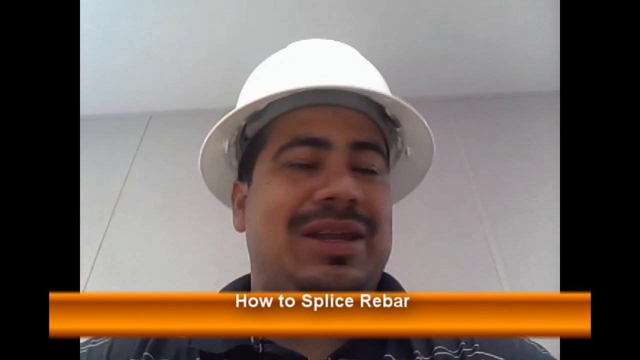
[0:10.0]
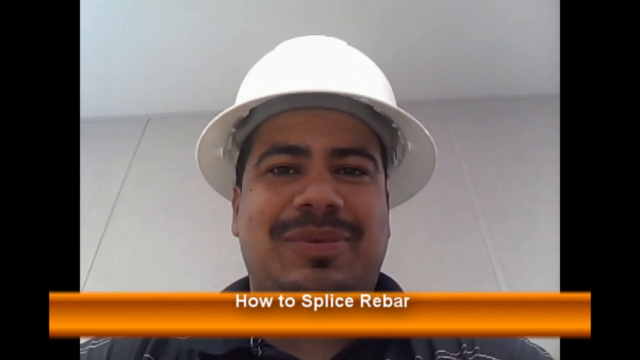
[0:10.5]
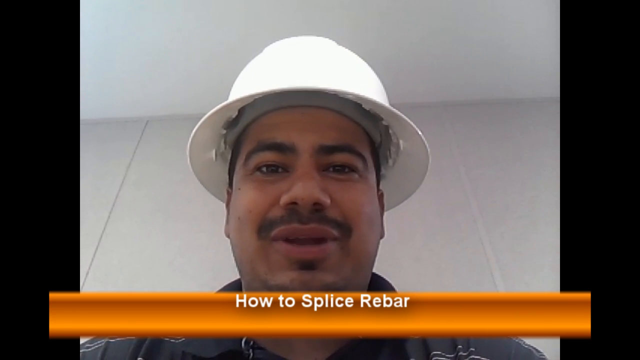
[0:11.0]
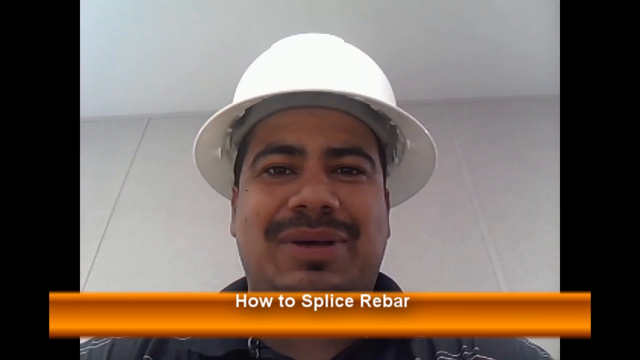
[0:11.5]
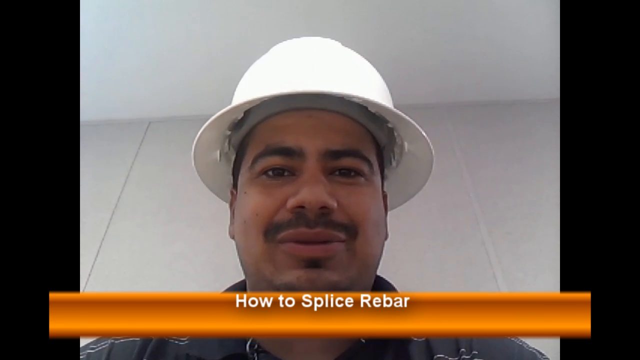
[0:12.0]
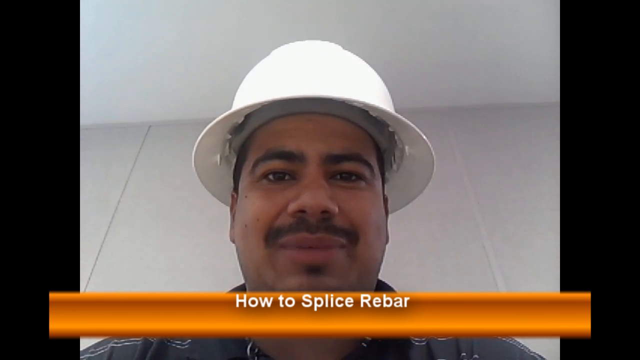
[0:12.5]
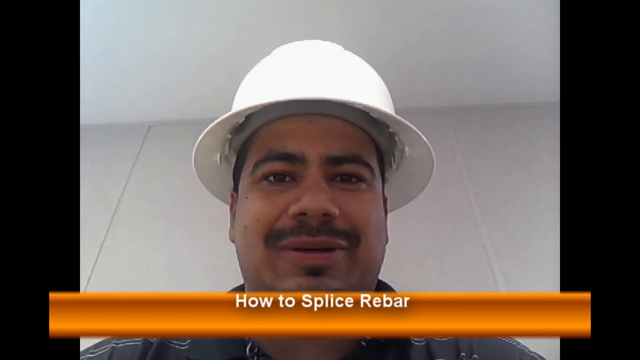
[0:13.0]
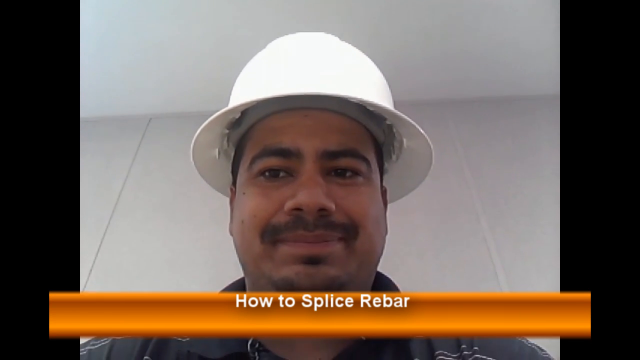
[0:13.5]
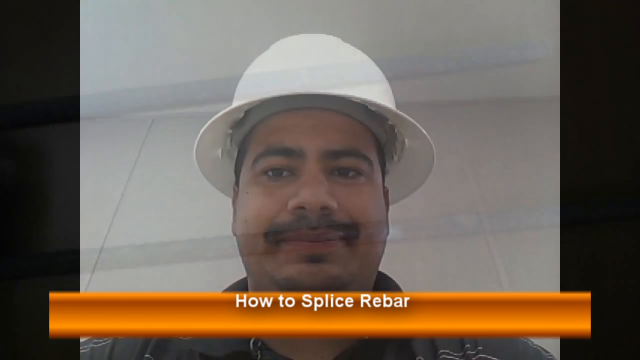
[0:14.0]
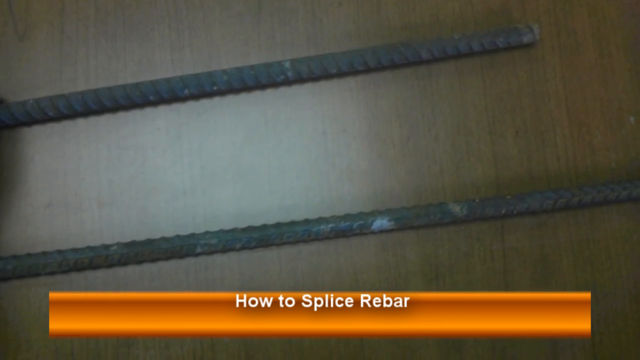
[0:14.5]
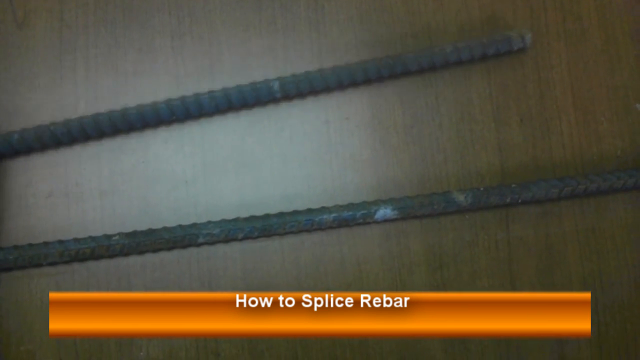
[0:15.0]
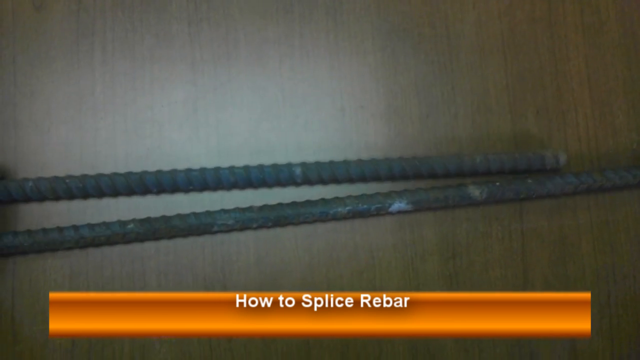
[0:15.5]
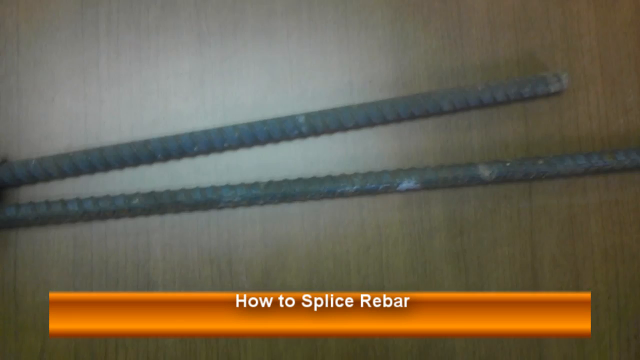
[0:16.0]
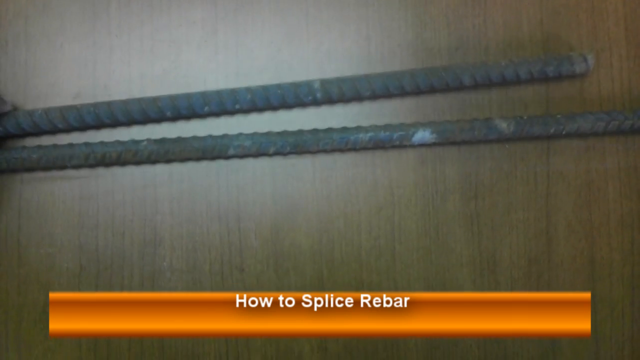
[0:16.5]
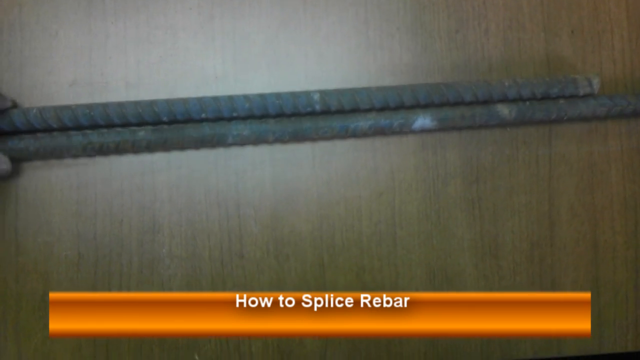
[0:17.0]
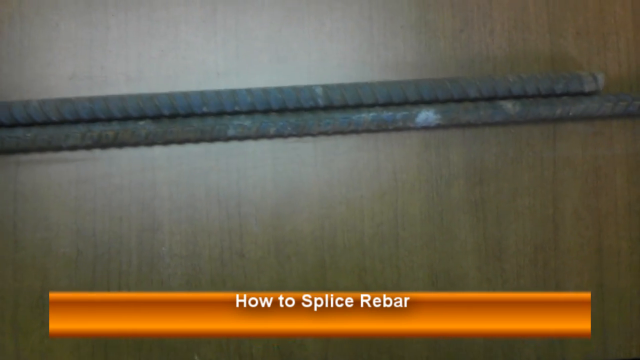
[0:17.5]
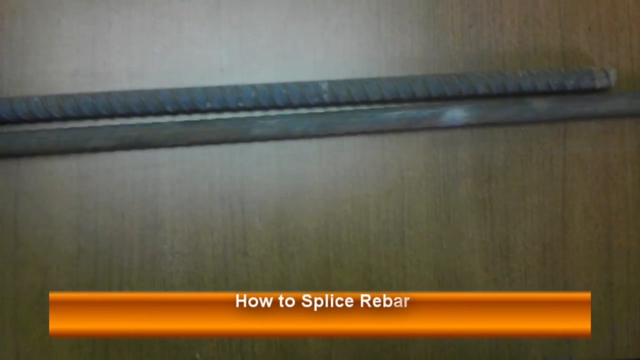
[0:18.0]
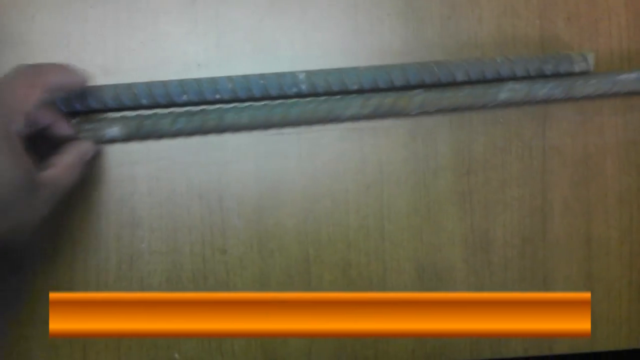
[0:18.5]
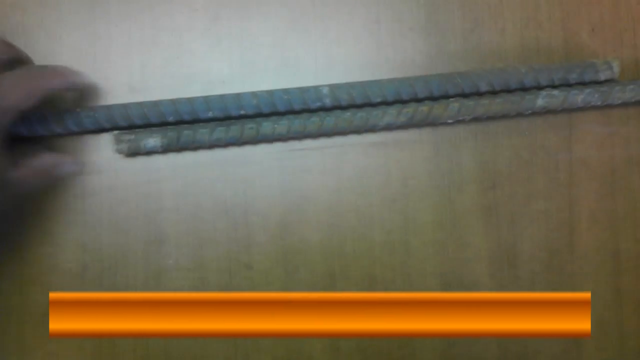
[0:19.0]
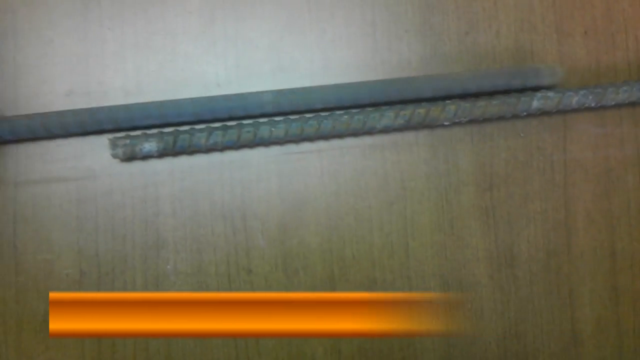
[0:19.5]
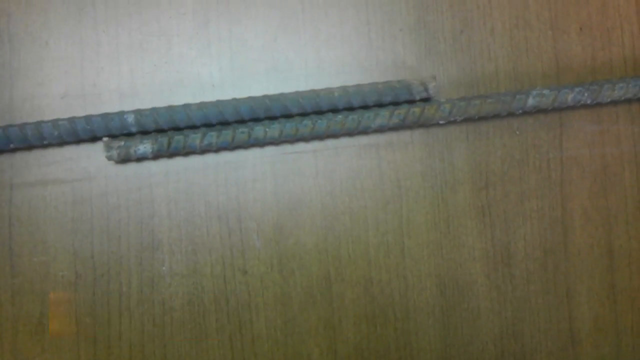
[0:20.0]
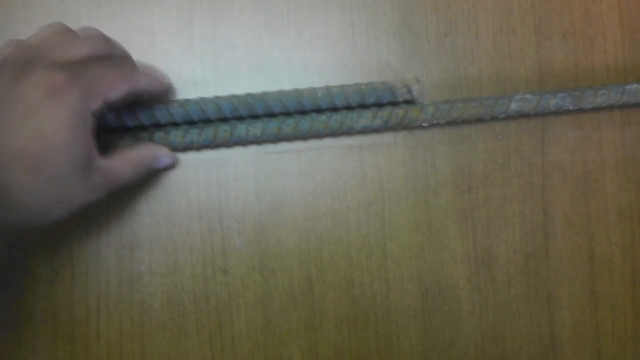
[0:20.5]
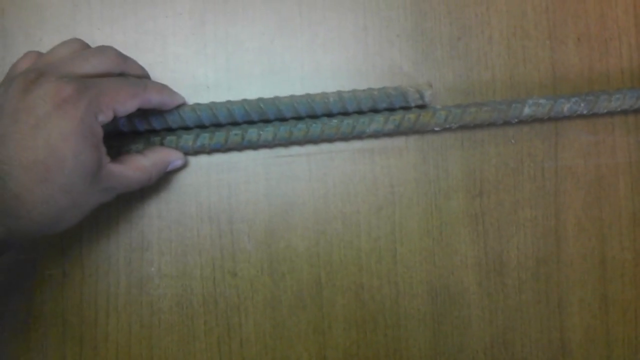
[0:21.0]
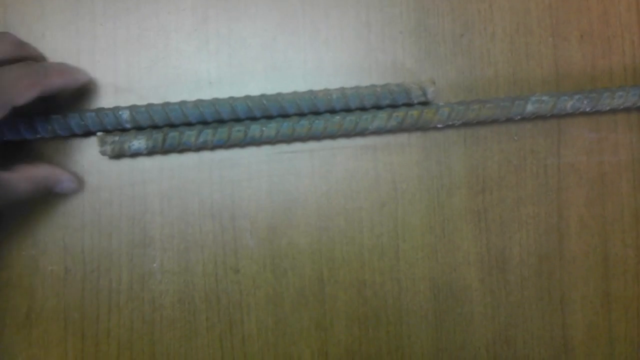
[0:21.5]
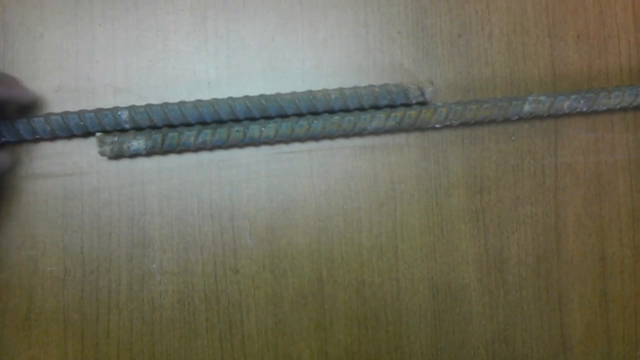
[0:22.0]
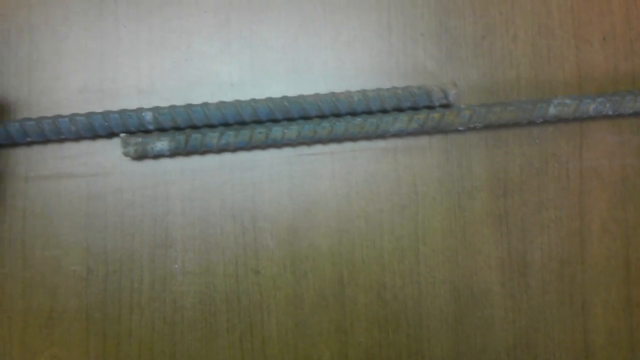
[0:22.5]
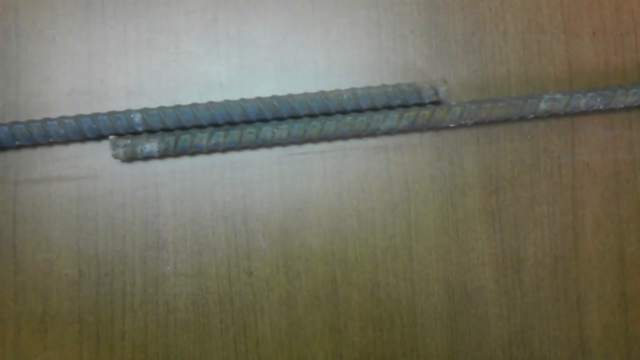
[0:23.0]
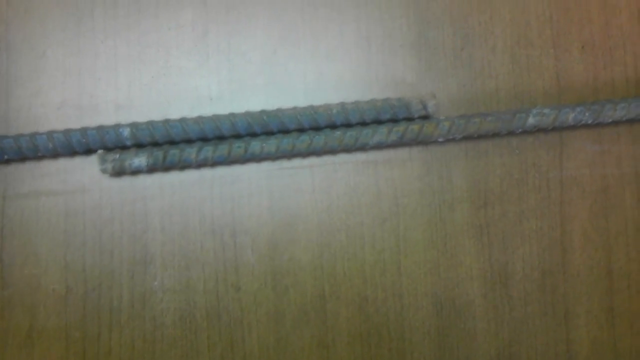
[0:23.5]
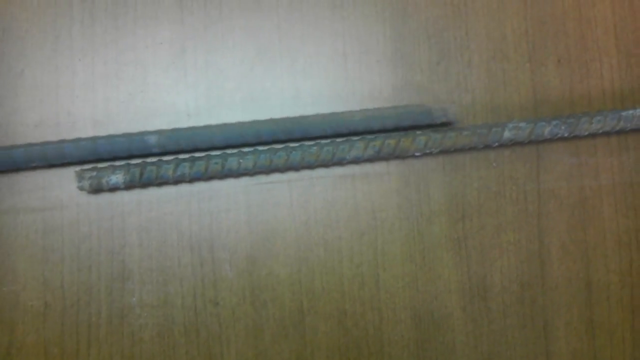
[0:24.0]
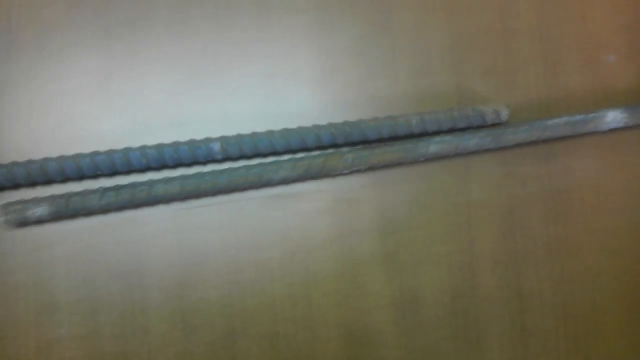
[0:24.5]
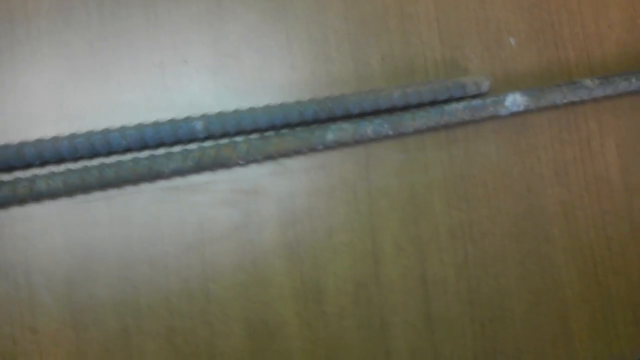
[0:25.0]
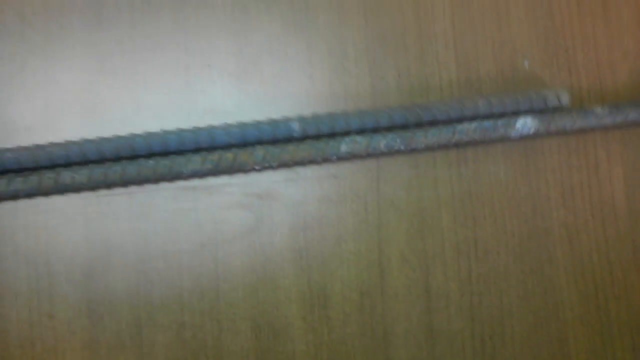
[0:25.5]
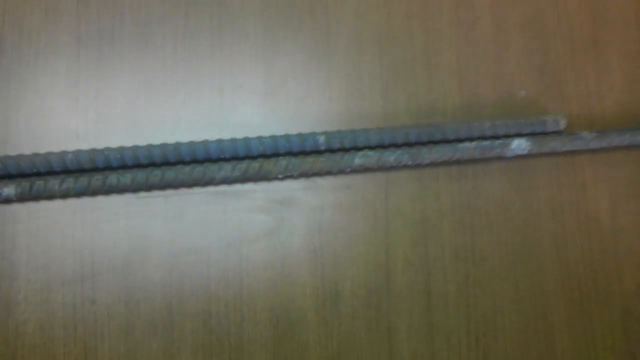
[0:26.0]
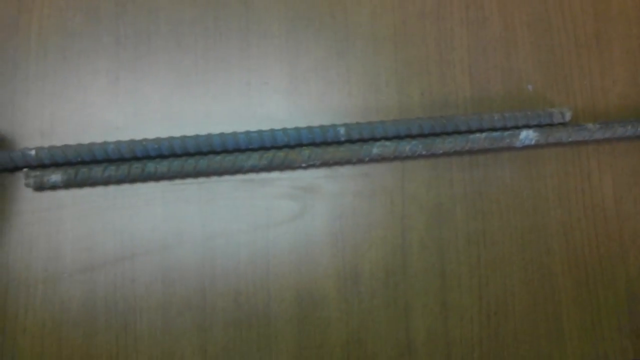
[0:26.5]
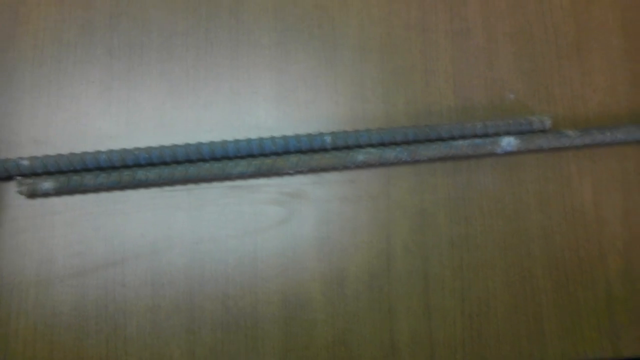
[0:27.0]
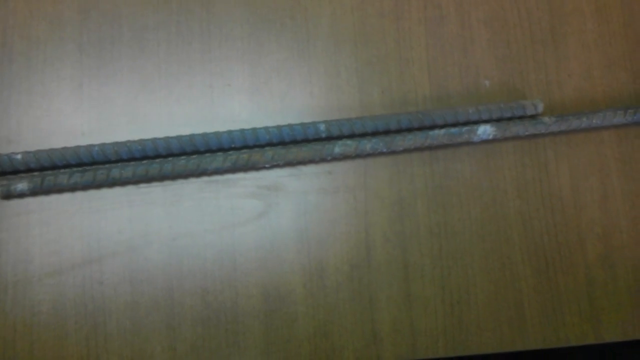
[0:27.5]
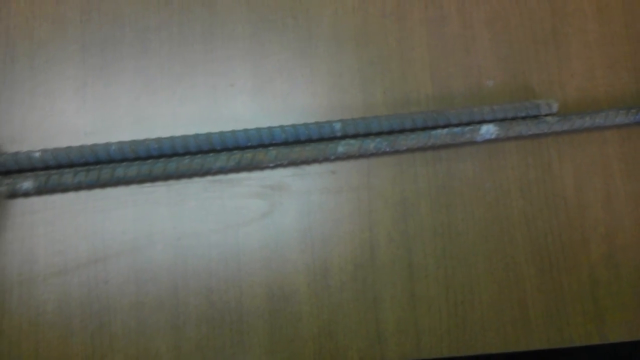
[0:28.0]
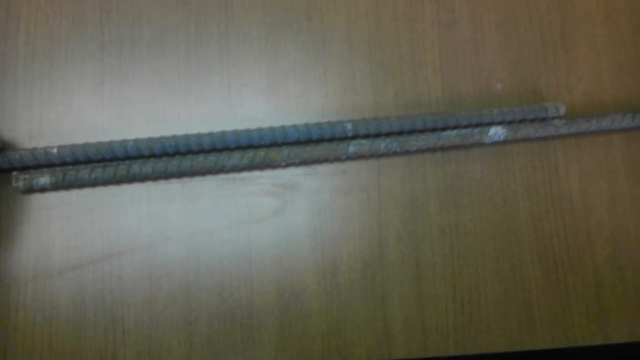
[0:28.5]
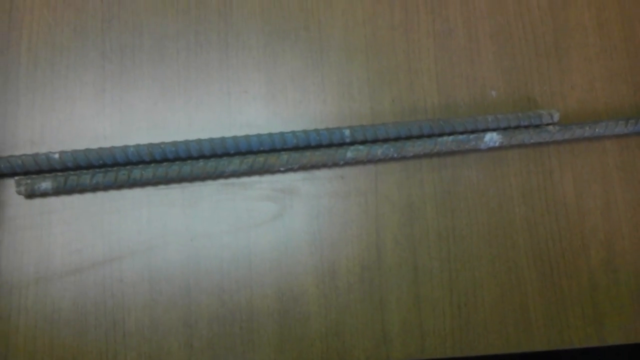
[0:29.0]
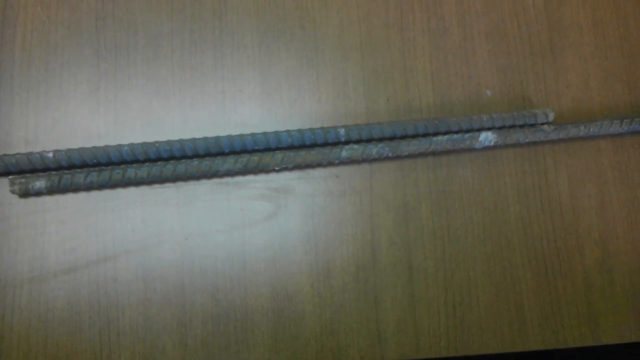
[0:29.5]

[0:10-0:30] The man in the white hard hat is in a white room with white walls, apparently holding the phone in his hand and pointing it up at his face. He wears a black shirt and has a mustache. He looks off to the side of the screen, then focuses back on the camera and addresses the viewer directly, smiling and seeming pleasant. The camera shakes a little because he is holding it. An orange band at the bottom of the screen reads "how to splice rebar" in white letters. The video then cuts to two long metal bars, rebar, lying on a wood-grain wooden table, with a hand, probably his, manipulating them. He holds the two bars up against one another, perhaps demonstrating the different textures of the two bars.